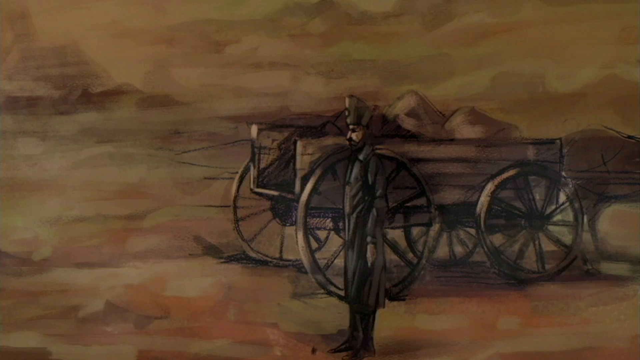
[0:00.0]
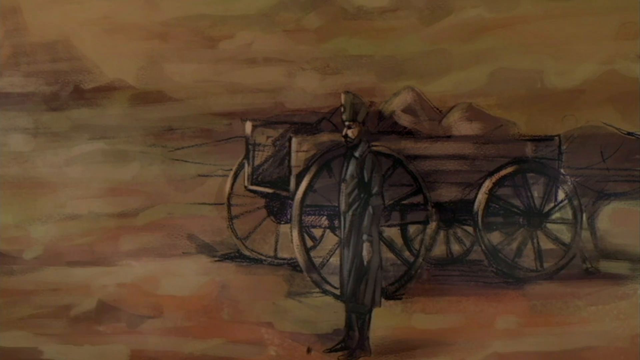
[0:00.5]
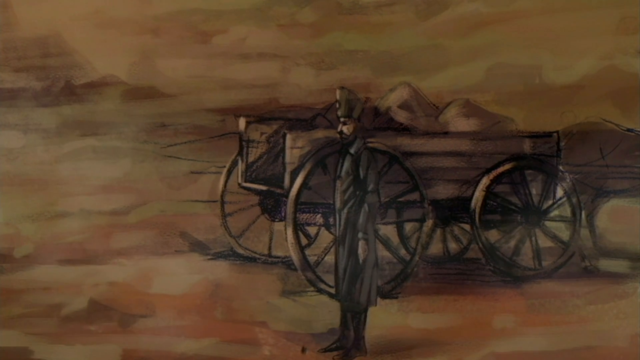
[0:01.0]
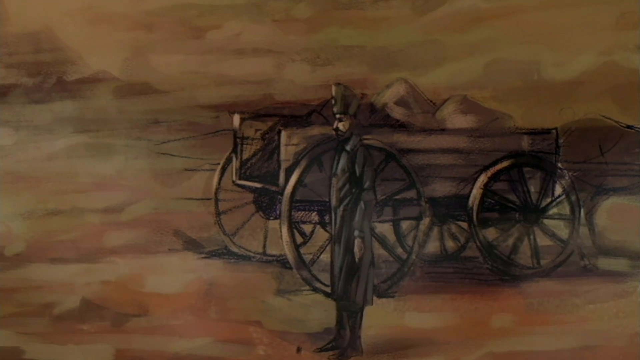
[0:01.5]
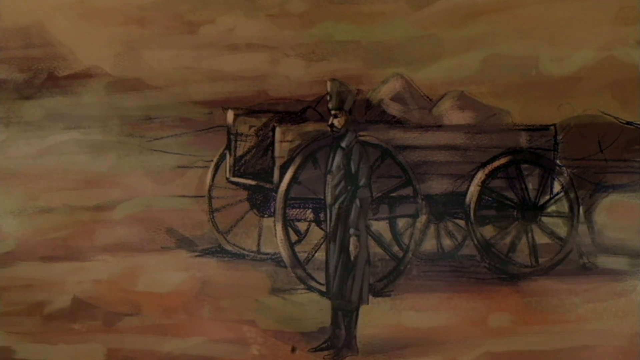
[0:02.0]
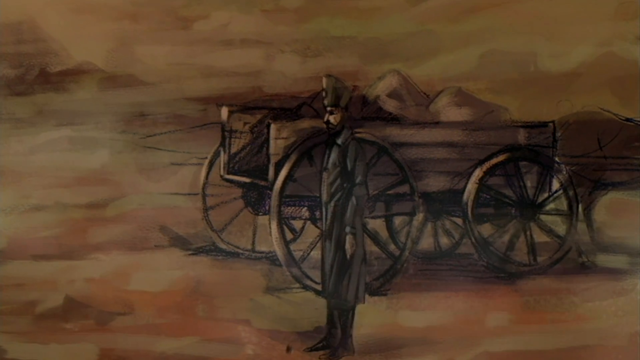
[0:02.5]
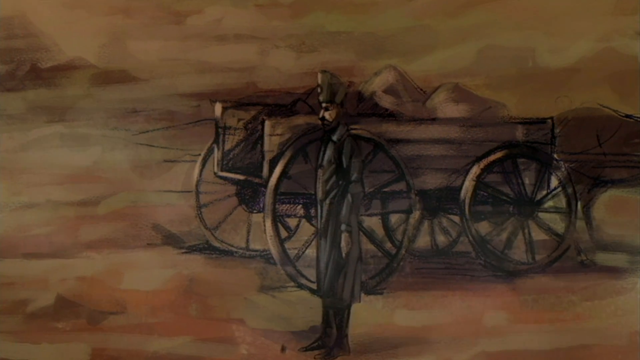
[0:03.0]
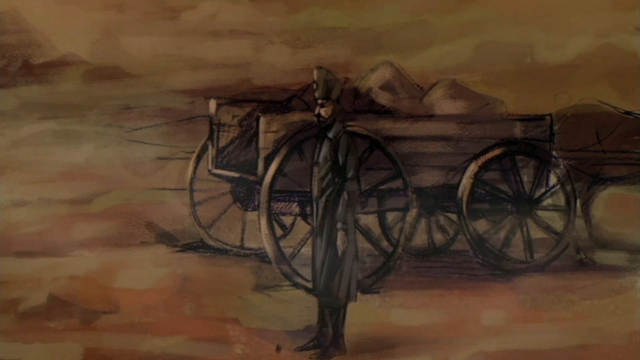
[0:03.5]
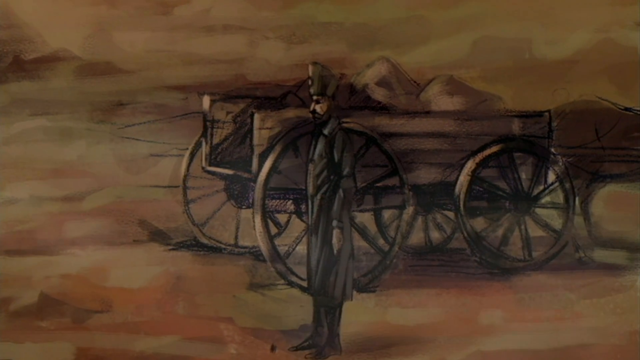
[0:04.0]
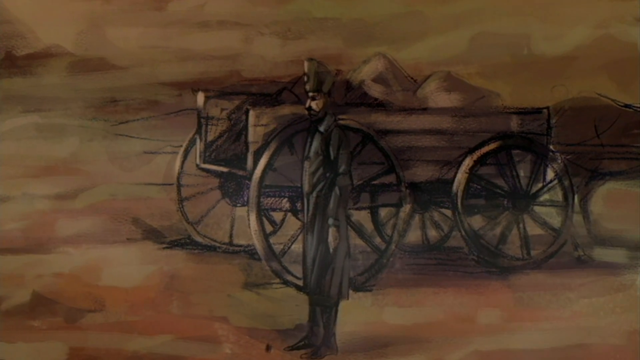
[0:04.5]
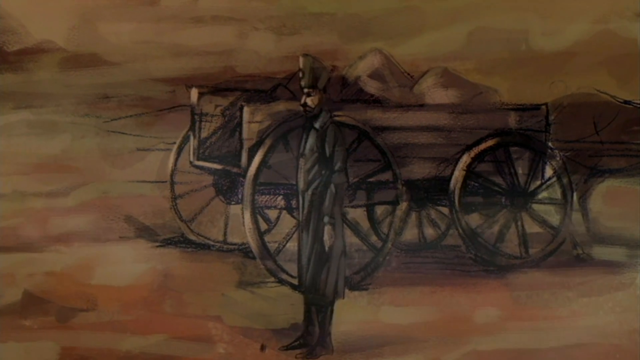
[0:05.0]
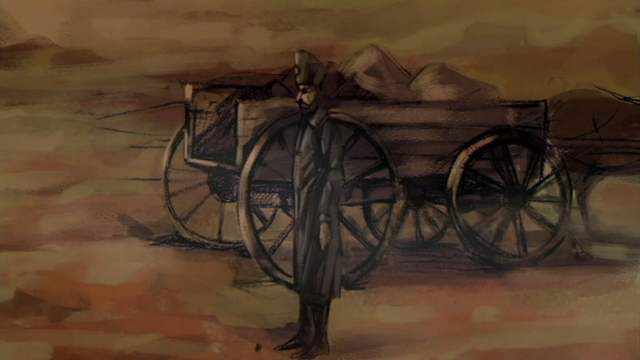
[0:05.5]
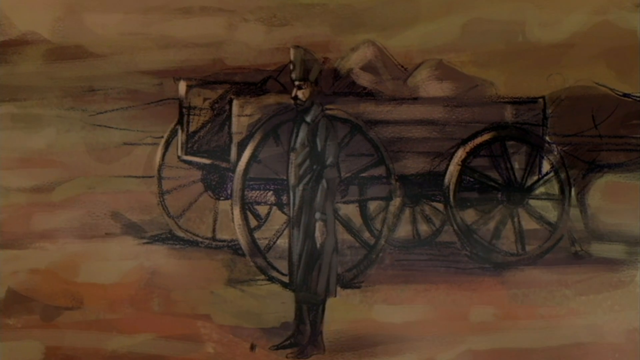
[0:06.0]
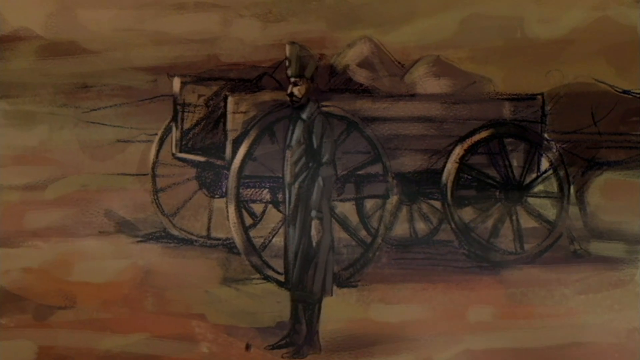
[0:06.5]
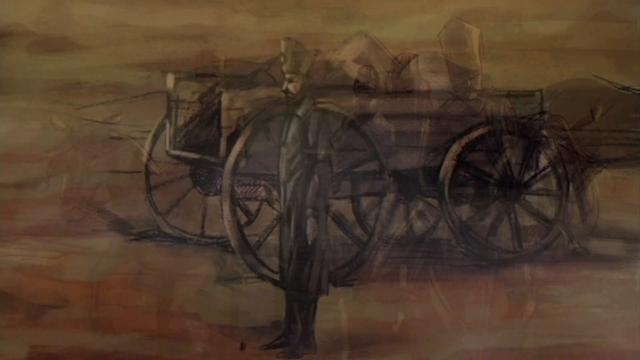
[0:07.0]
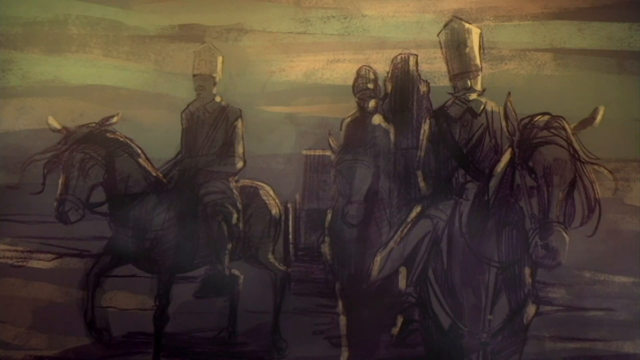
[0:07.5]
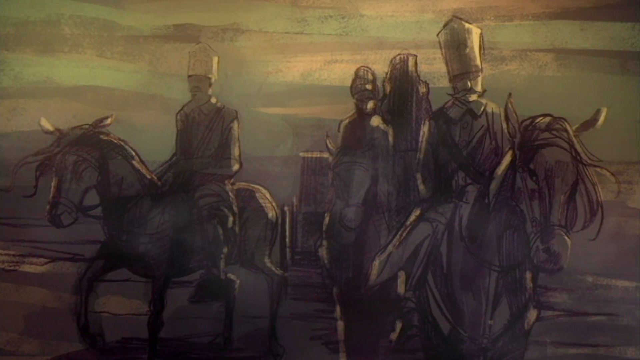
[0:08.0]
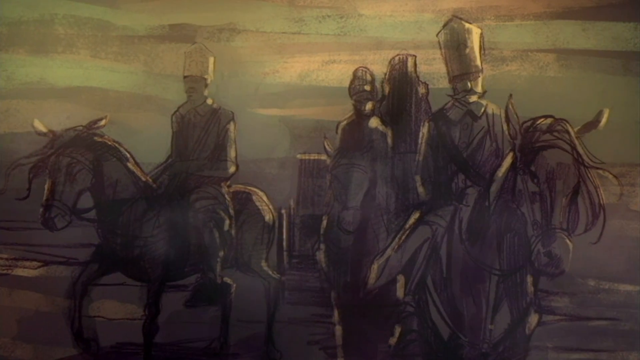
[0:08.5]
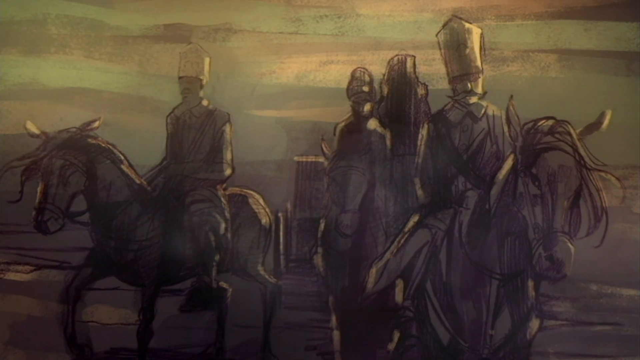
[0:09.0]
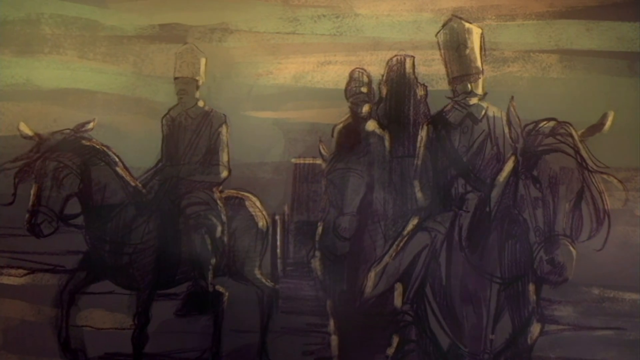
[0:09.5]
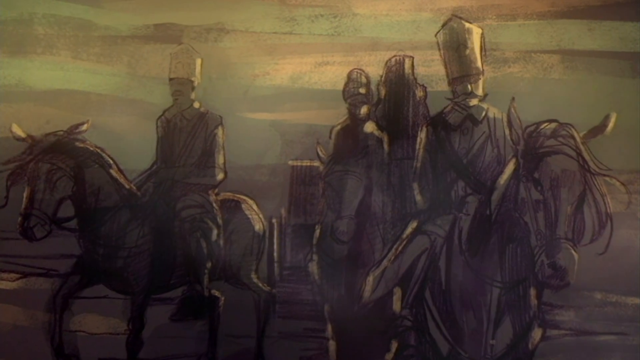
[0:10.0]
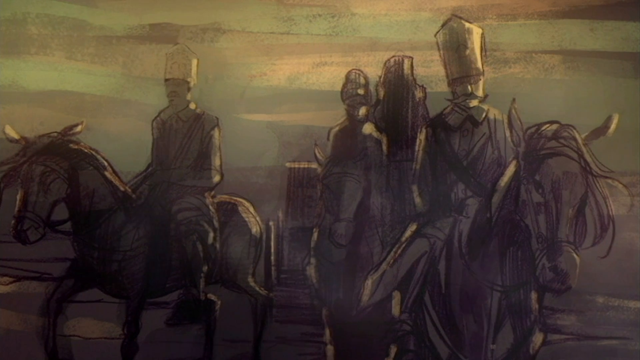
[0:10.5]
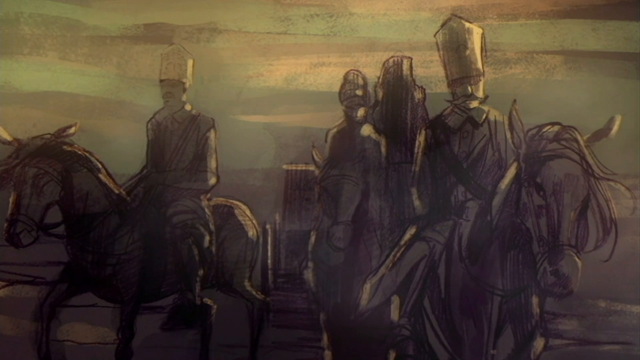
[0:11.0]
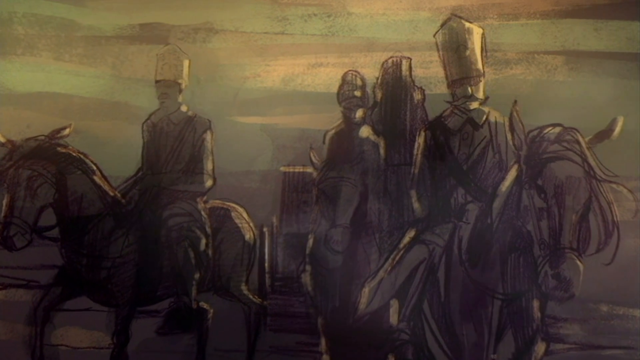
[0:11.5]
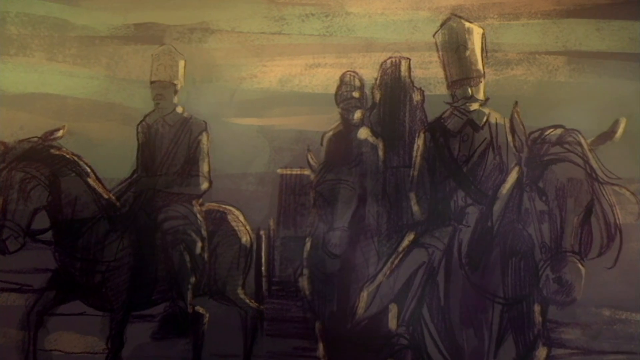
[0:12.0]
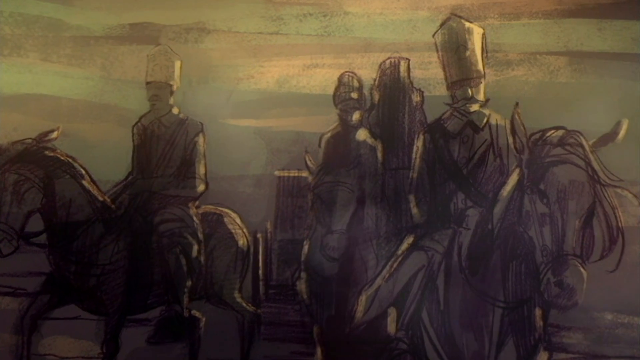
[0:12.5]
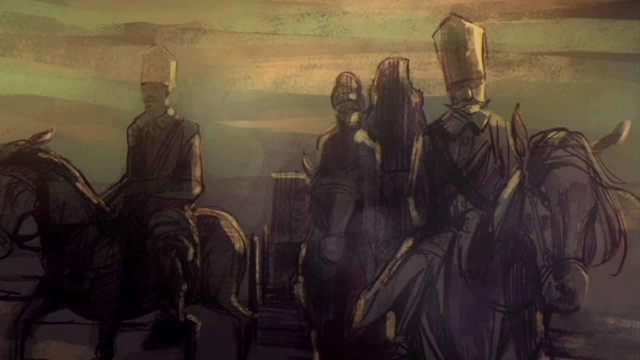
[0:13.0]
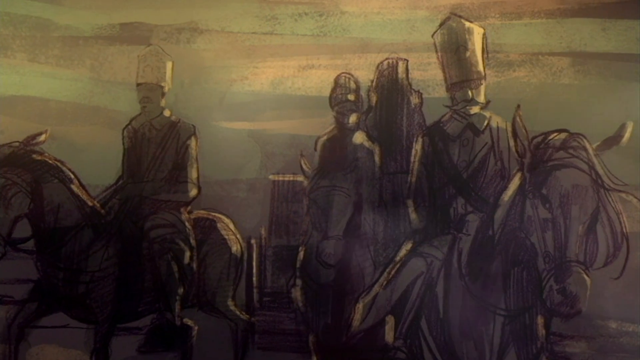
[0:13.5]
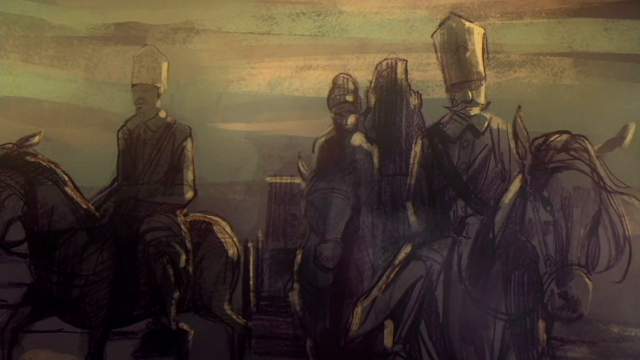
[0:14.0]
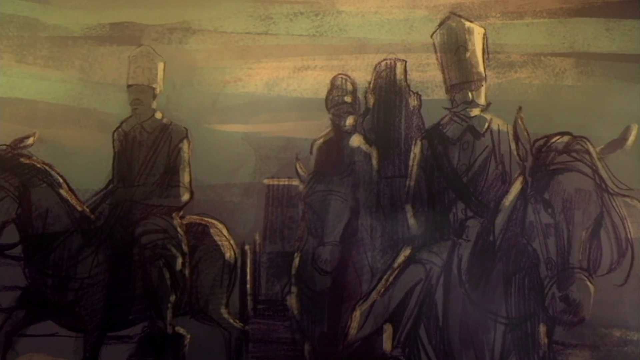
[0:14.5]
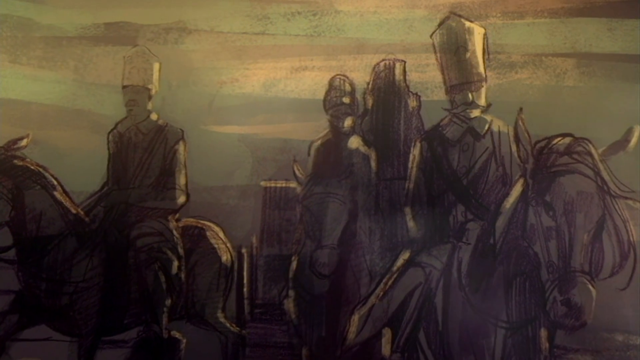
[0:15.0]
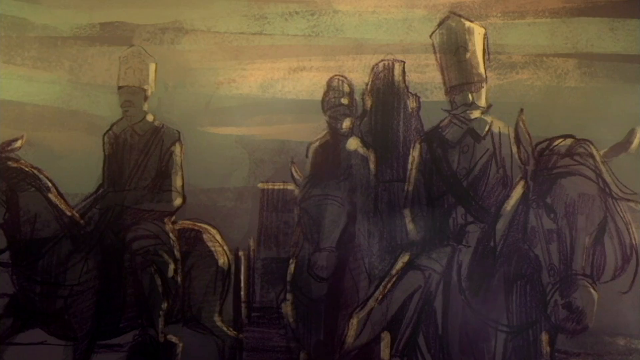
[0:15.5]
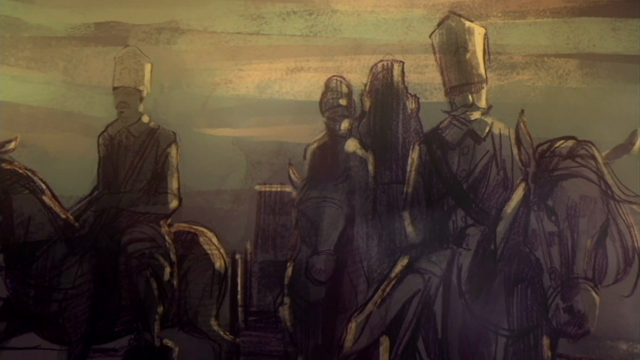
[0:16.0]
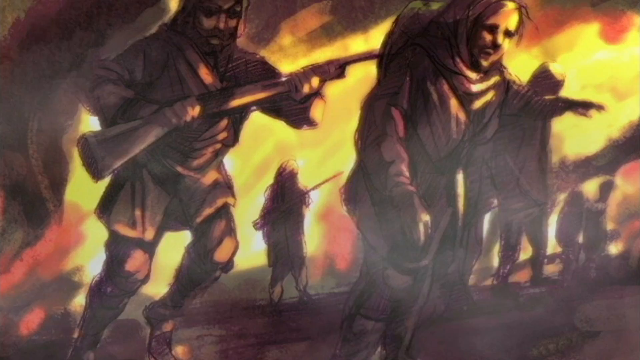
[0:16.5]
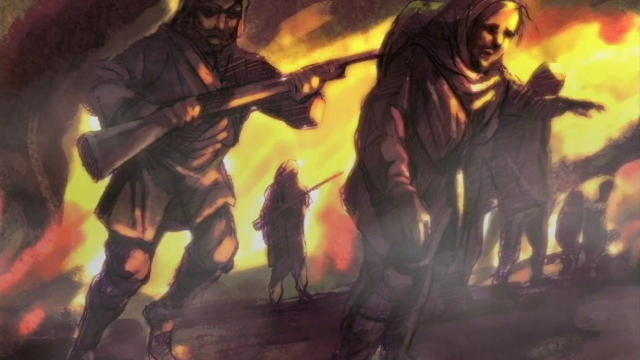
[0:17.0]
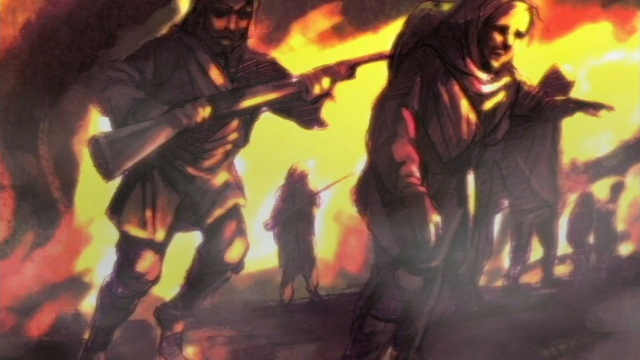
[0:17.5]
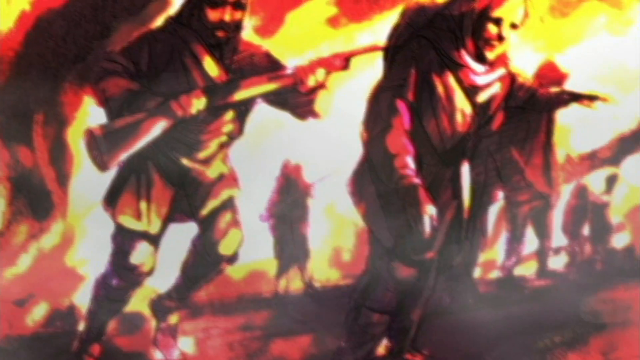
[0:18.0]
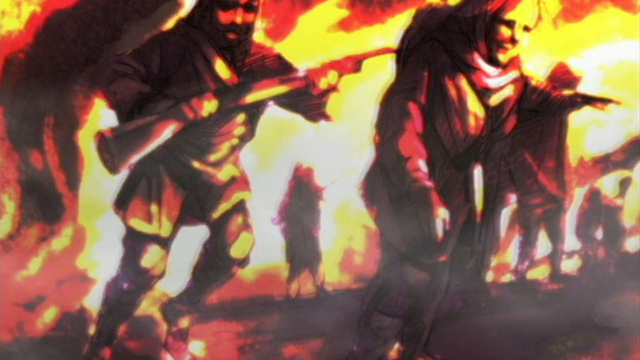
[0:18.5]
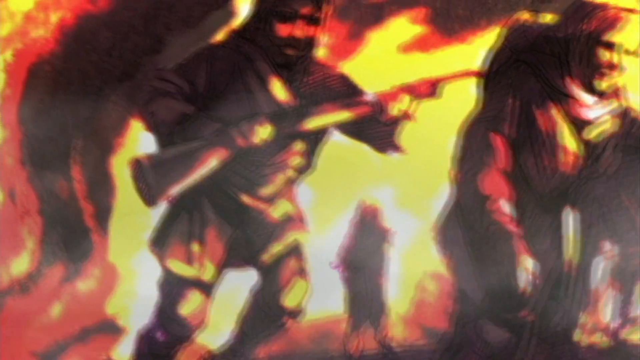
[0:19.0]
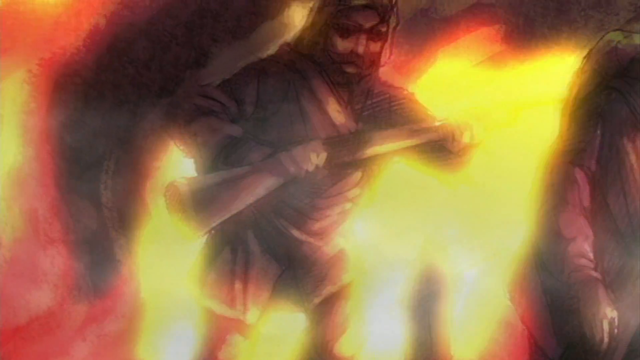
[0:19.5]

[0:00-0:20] The video begins with a brownish-looking background all over, with a little black for clouds in the sky and a little black for mountains on the left and right sides. The back end of a horse is visible, the horse going off the right side. Then there is a big wagon with some stuff inside it and big round wheels with long spokes. A man stands wearing some sort of general's hat and a big long coat, with a beard, and the view pans in on him very slowly. Next comes another crudely drawn scene: a horse on the left with a man on it, and a horse on the right, head facing forward, that also has a man on it. Behind them appear to be two people, though they look somewhat like chicken scratch. A little of a horse head and a carriage following behind them is visible as the view slowly pans in on them. The man in the front has a mustache. Then there is a fiery-looking black background at the bottom, and the outlines of four people are visible in the distance. What looks like an older woman walks to the right, looking very feeble, and behind her is a man with a gun, its butt to the left and barrel pointing up to the right; he looks like he is about to shove it into her back. There is fire and smoke all around them, and between them in the distance another person is visible. The image bounces left, down and left, then everything takes on a red or yellowish hue and the view zooms in on the man quickly.